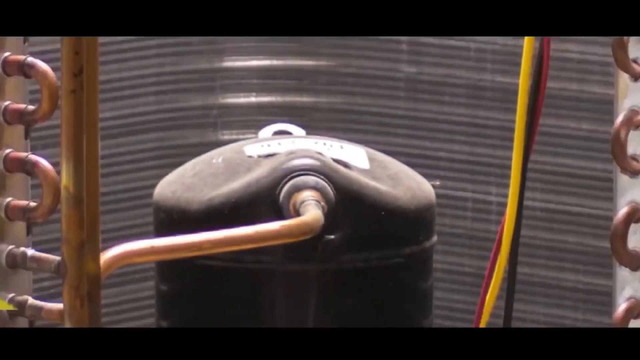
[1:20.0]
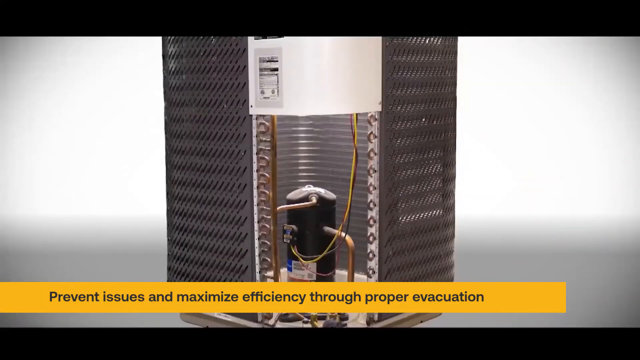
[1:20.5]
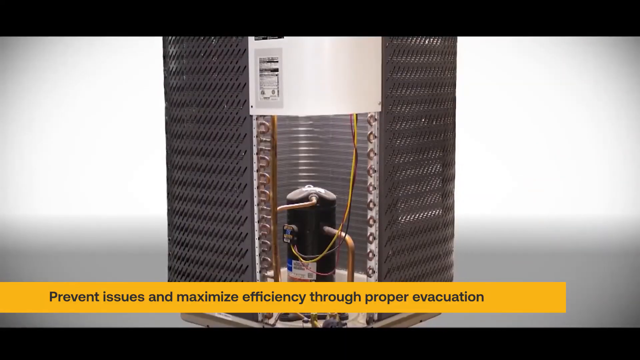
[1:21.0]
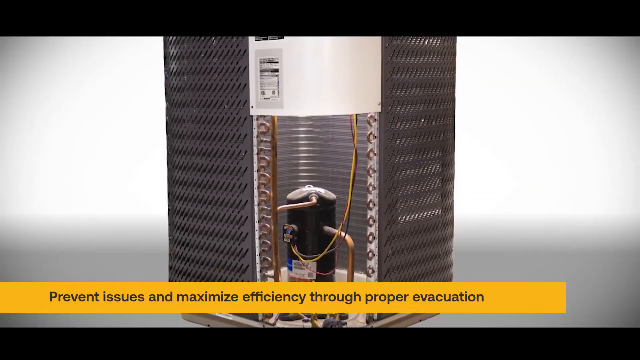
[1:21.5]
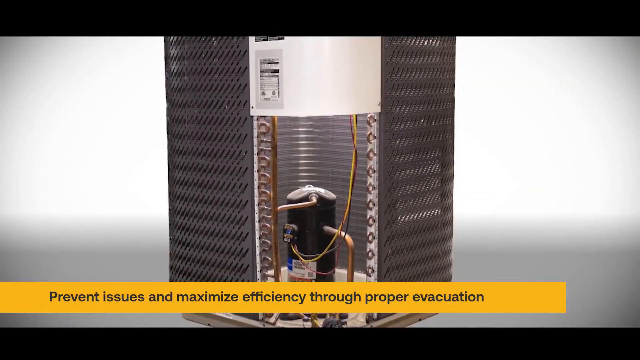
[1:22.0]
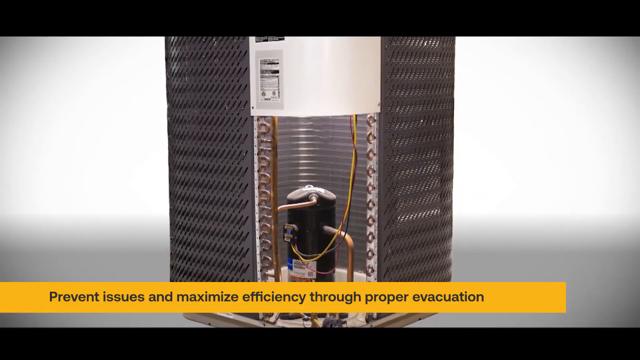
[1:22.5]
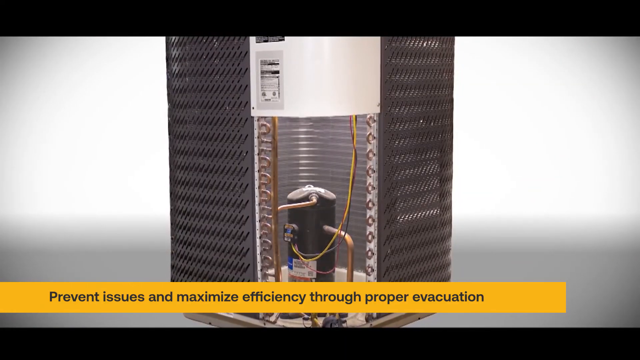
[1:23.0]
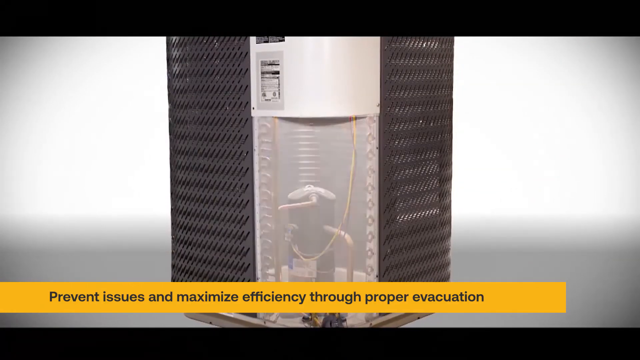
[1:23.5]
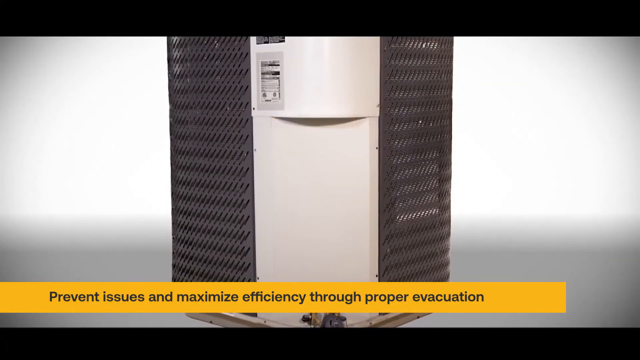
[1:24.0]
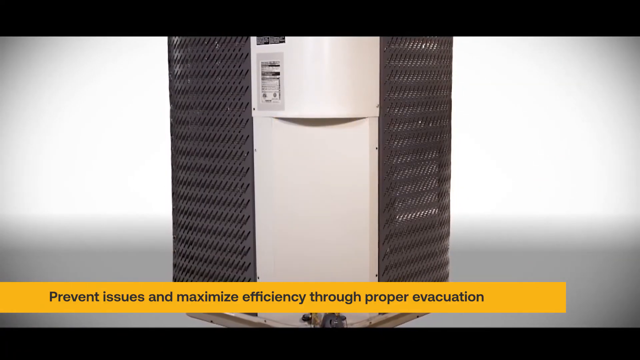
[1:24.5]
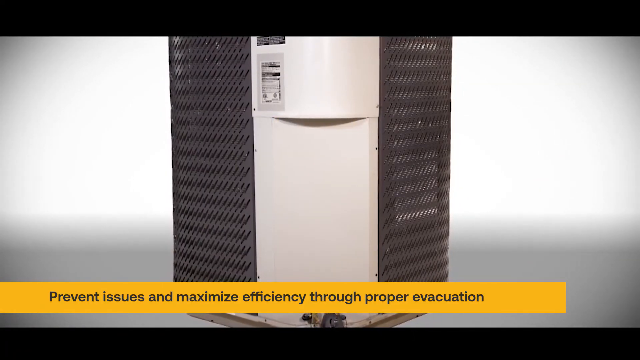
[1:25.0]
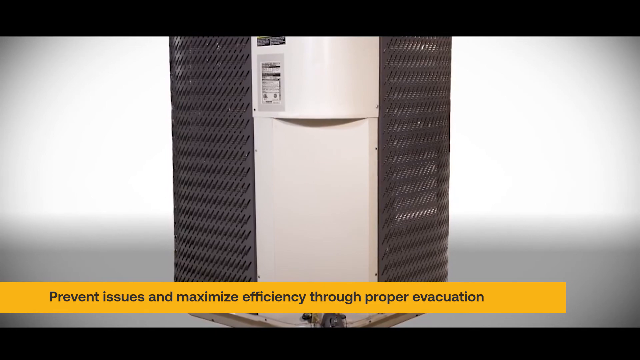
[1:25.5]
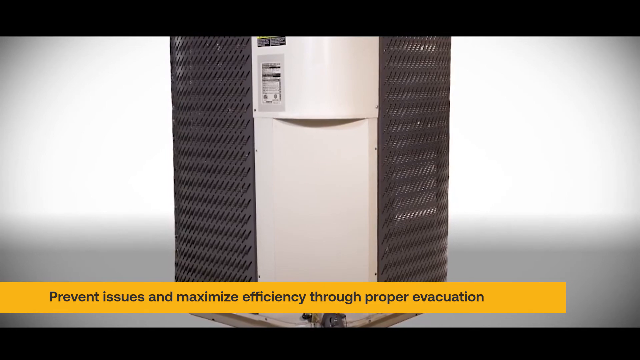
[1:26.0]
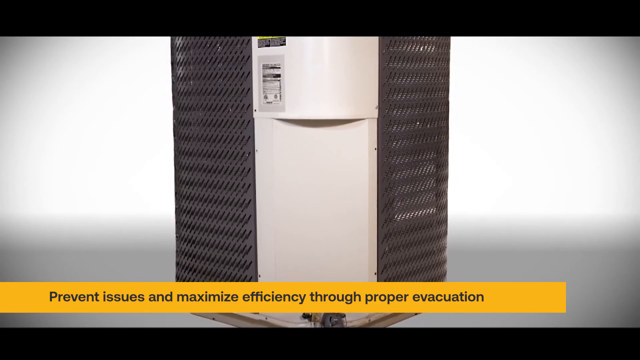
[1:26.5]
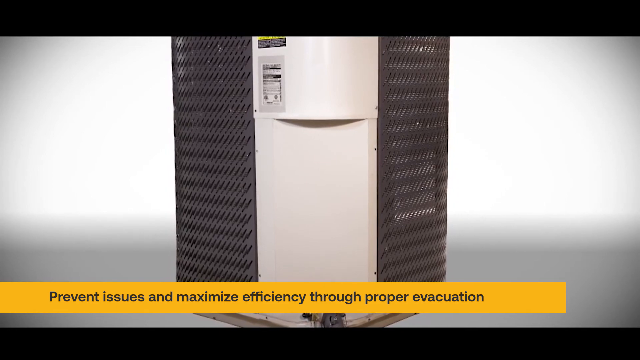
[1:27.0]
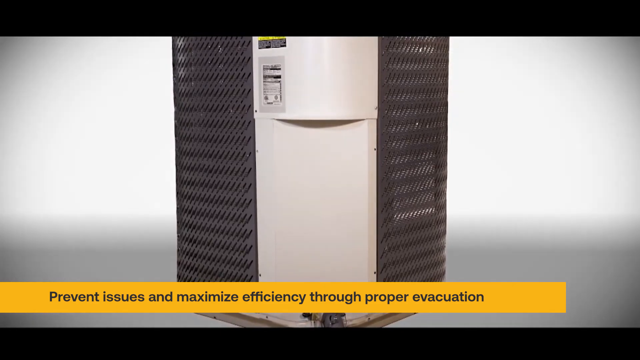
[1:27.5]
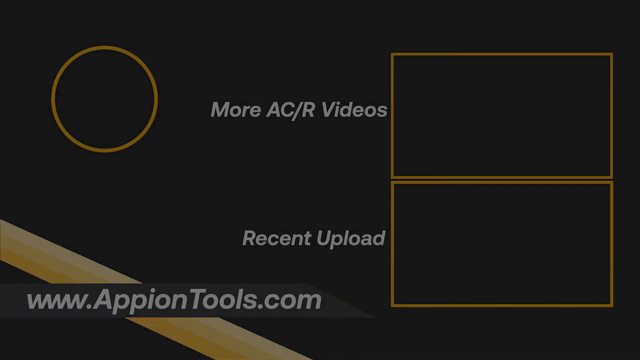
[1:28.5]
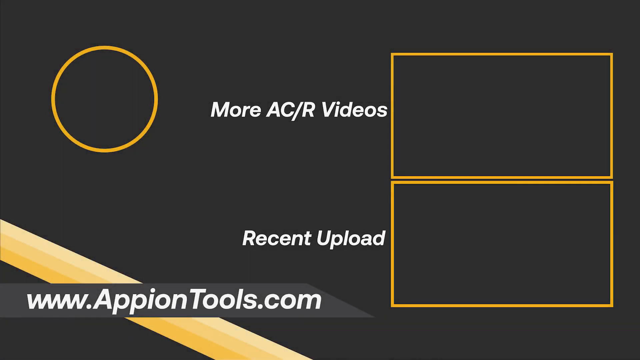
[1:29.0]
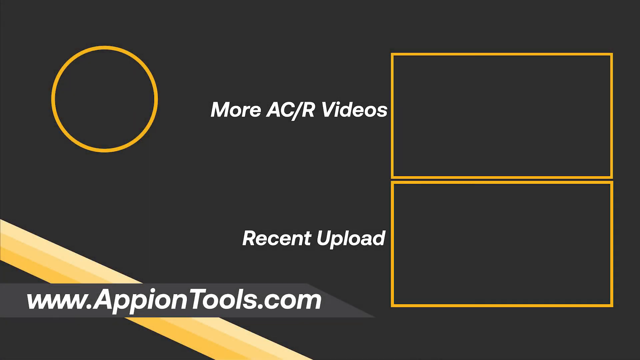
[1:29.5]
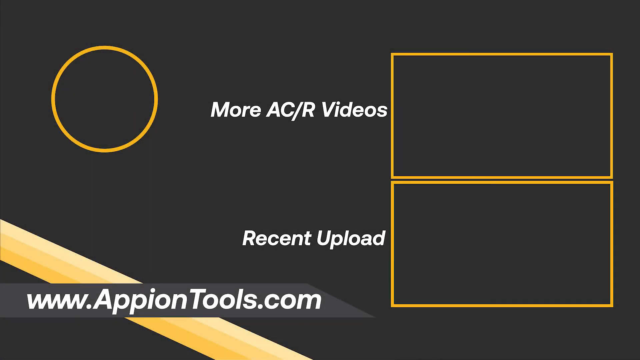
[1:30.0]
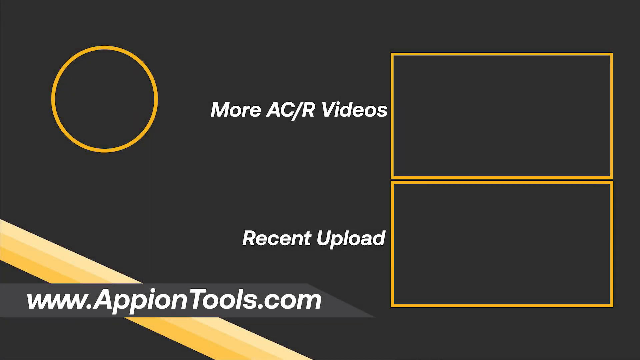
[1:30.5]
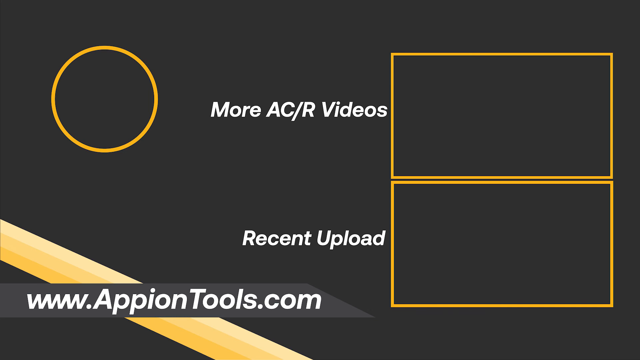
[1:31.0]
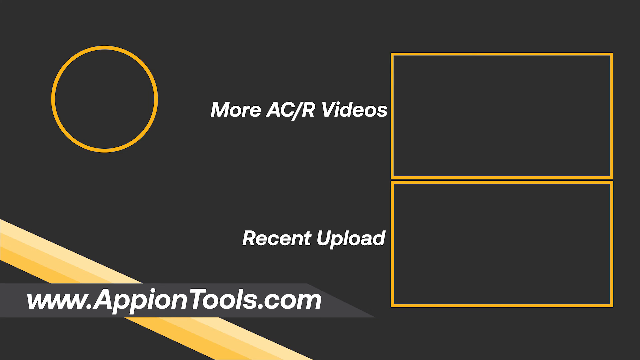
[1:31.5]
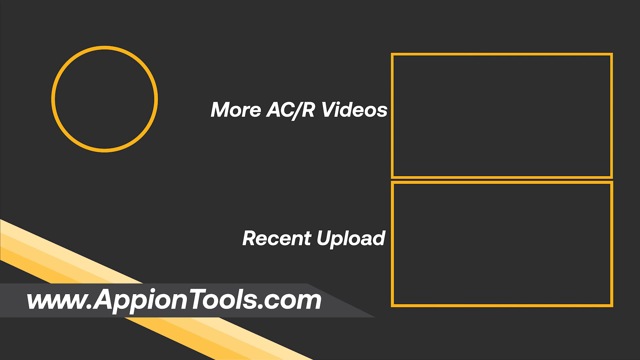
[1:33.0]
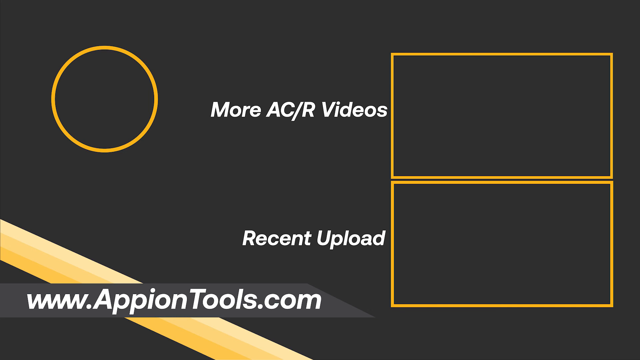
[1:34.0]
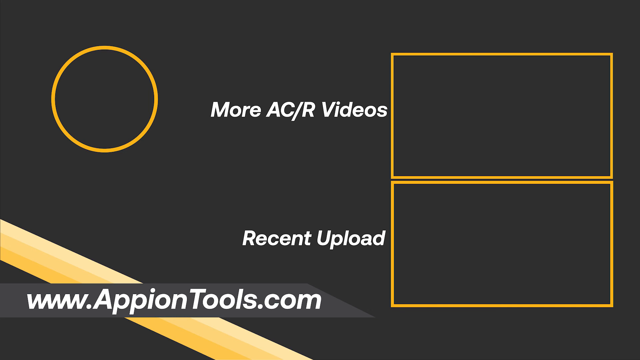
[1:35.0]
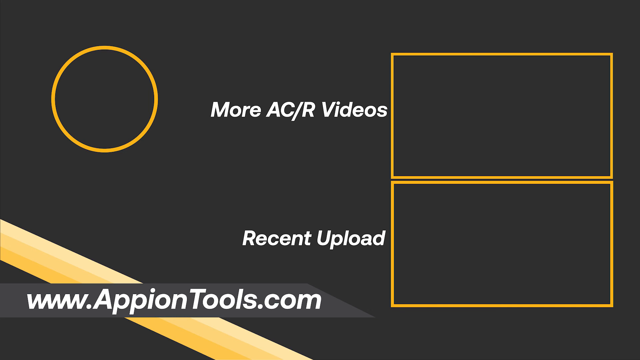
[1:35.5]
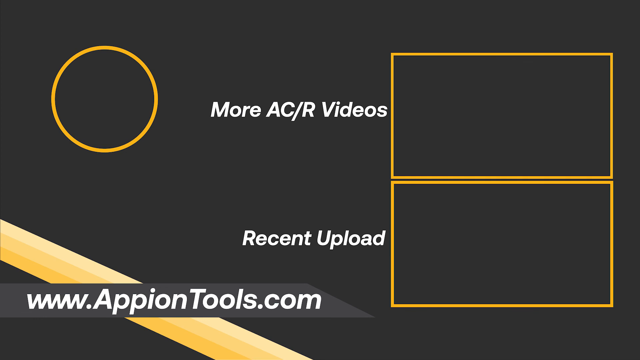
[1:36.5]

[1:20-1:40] Footage of the whole unit is shown, reversing the earlier zoom-in from the molecular level back out to the entire unit. The unit possibly is for heating or perhaps central air, and contains coolant. Text says "prevent issues that maximize efficiency through proper evacuation". The video then transitions to an outro screen with a gray background, an orange circle on the left side and two orange squares on the right side. Text nearly touching the top square reads "more AC/R videos", and below it is a recent uploads section. In the very bottom left is a website link for Appion Tools, presumably the company behind the video.